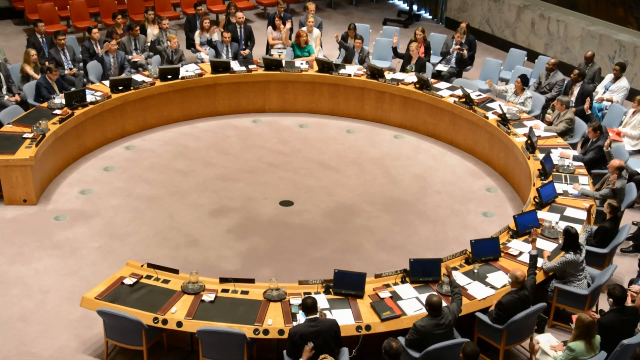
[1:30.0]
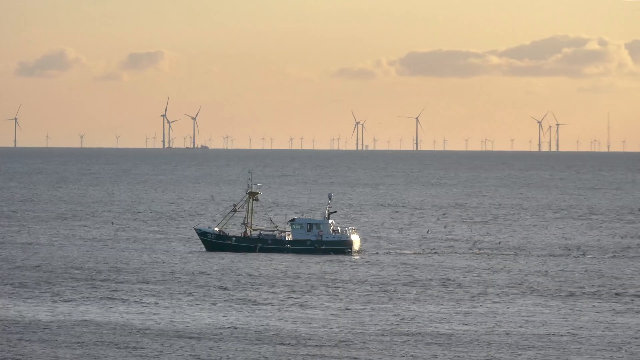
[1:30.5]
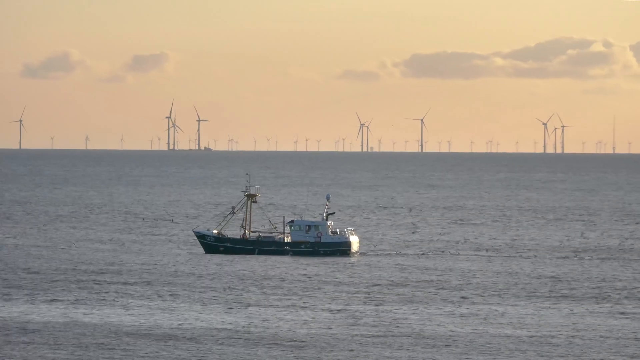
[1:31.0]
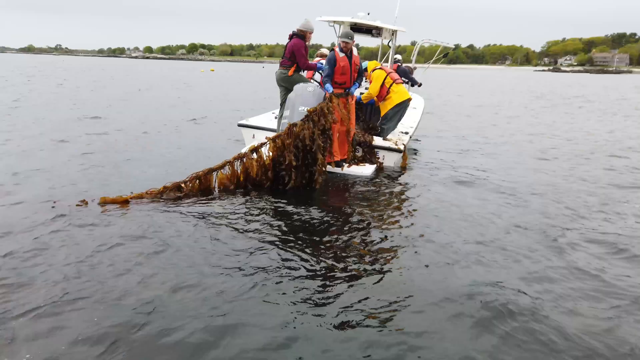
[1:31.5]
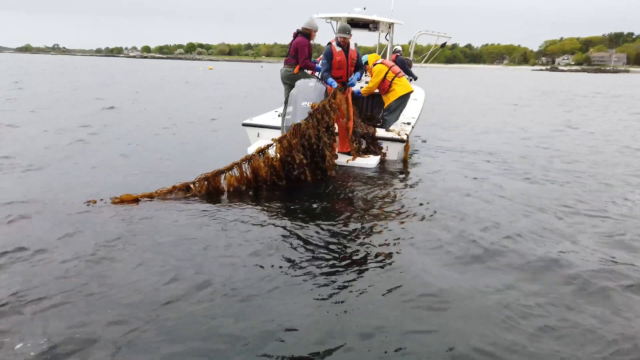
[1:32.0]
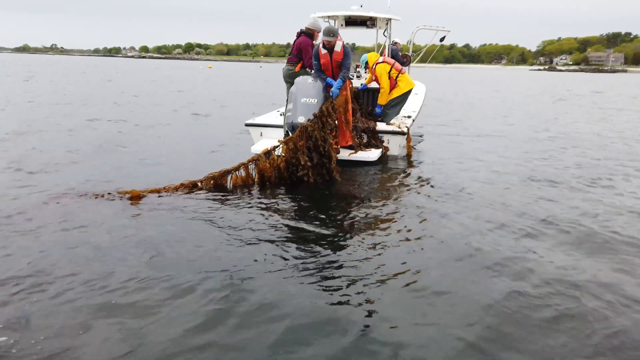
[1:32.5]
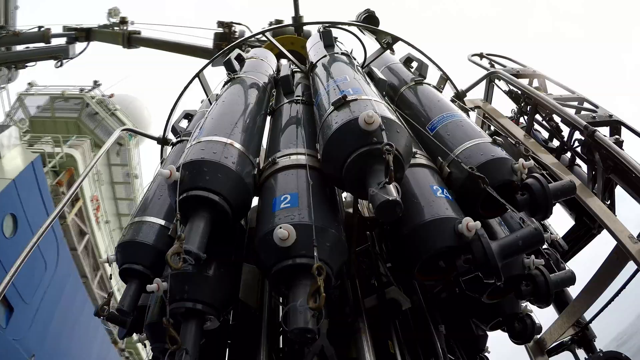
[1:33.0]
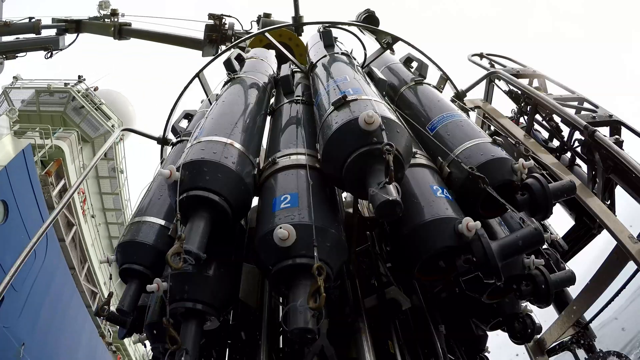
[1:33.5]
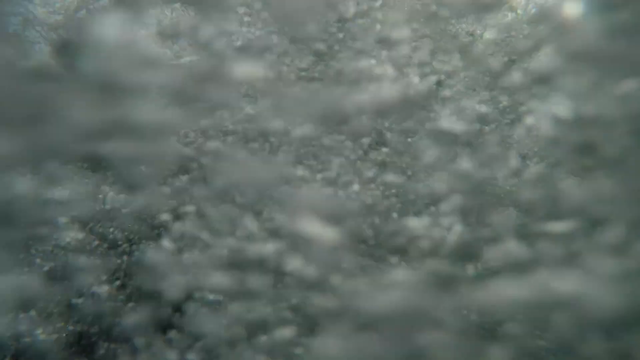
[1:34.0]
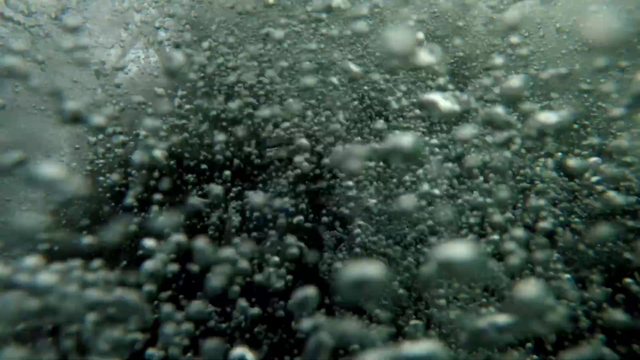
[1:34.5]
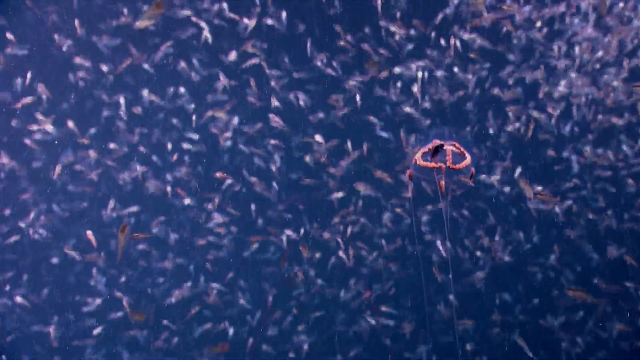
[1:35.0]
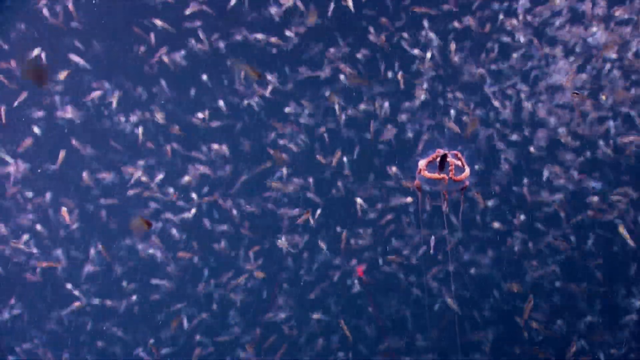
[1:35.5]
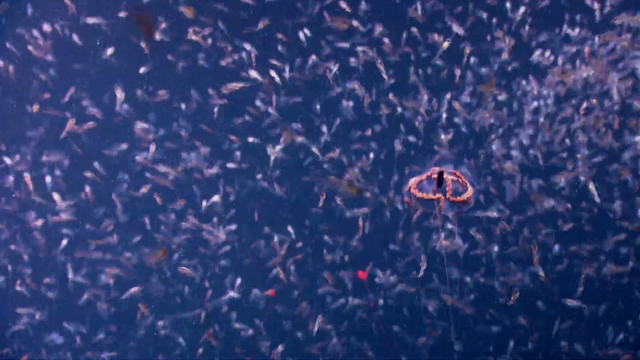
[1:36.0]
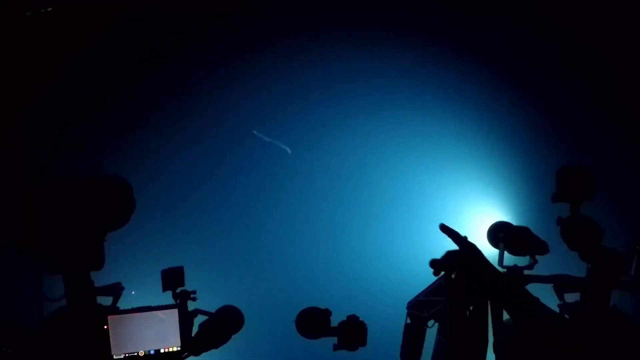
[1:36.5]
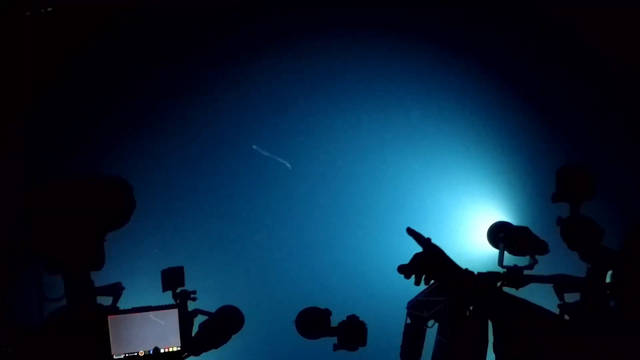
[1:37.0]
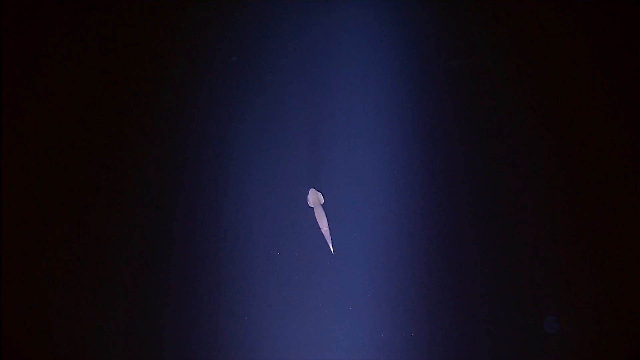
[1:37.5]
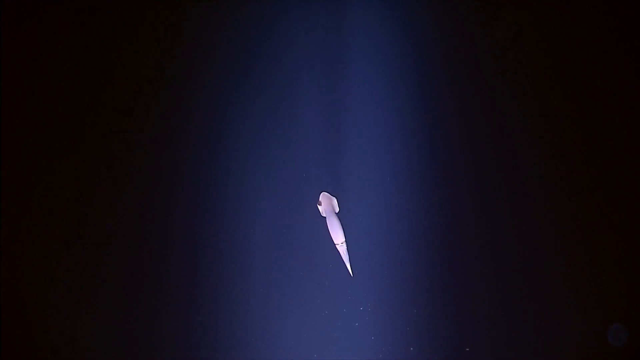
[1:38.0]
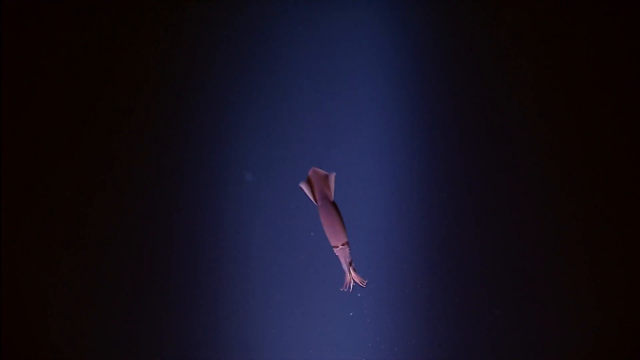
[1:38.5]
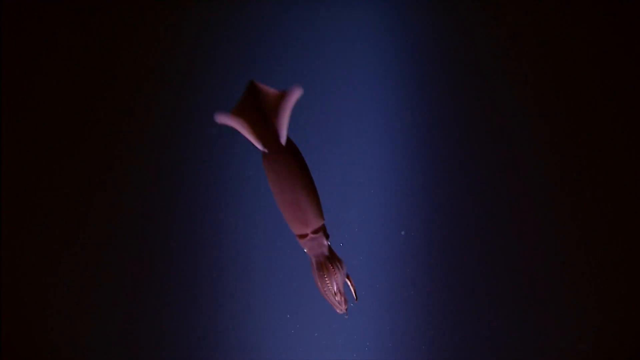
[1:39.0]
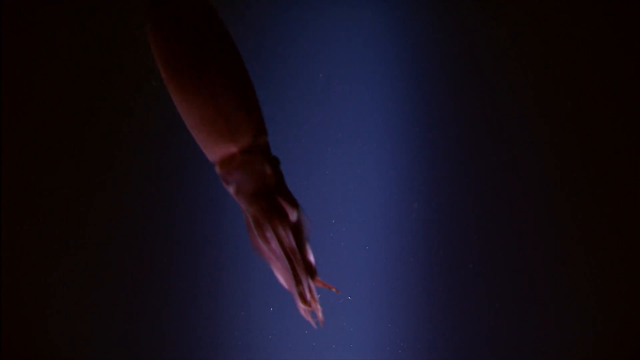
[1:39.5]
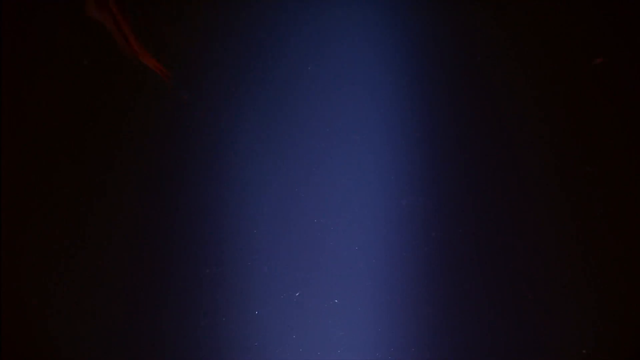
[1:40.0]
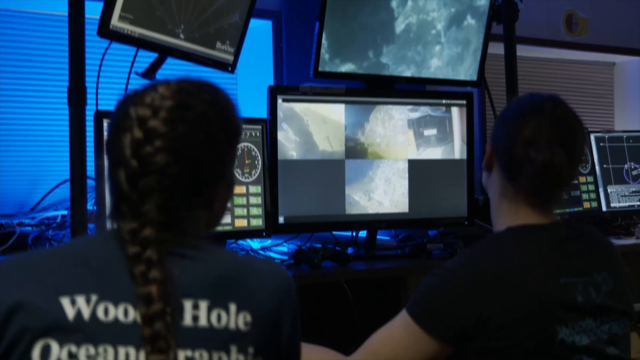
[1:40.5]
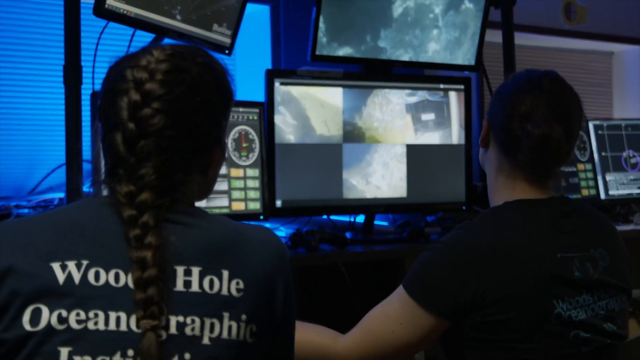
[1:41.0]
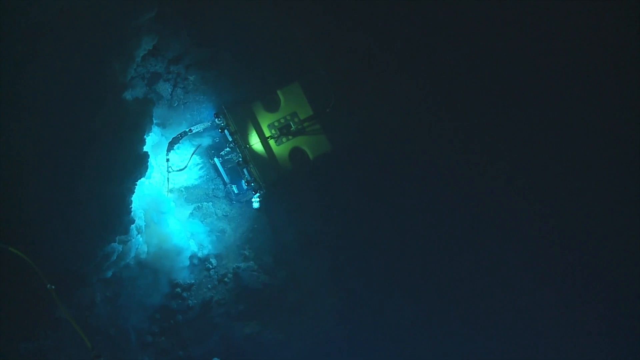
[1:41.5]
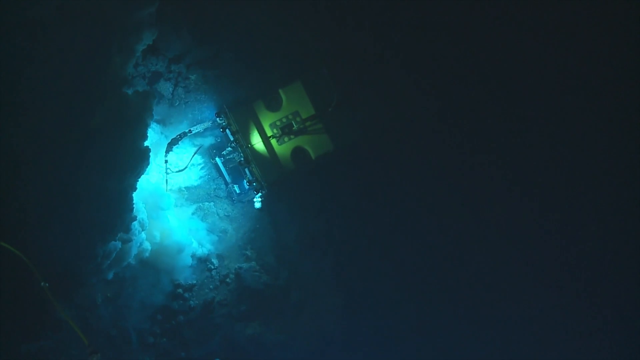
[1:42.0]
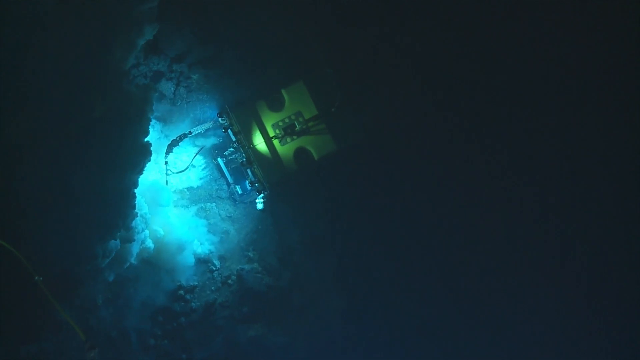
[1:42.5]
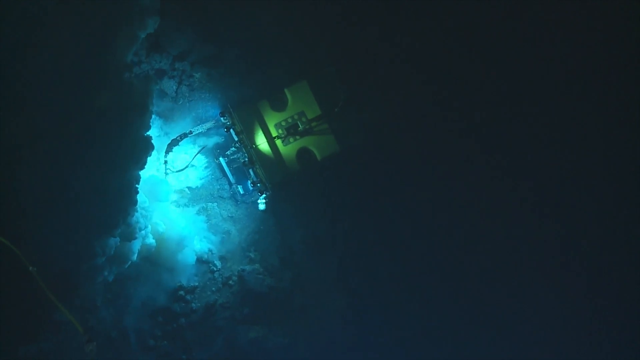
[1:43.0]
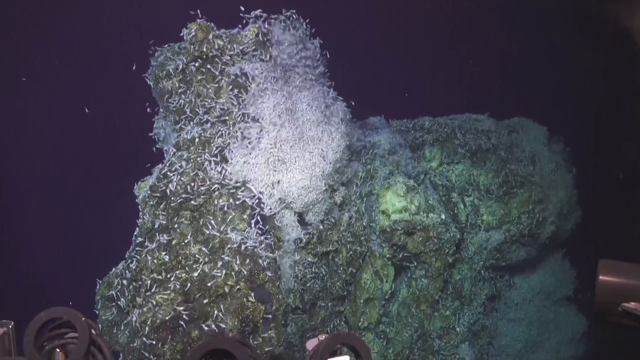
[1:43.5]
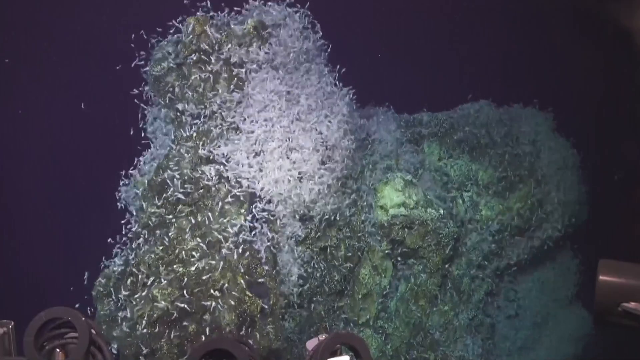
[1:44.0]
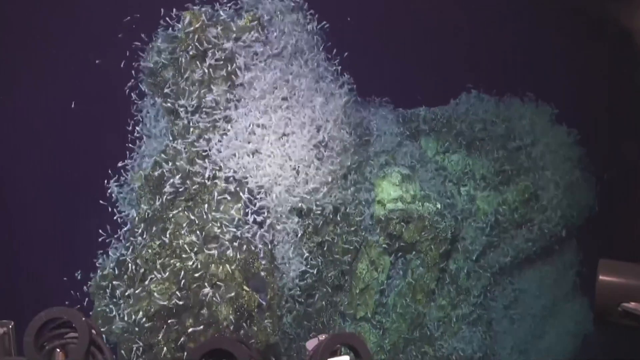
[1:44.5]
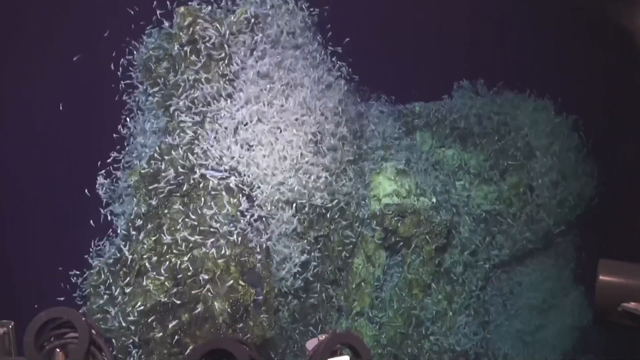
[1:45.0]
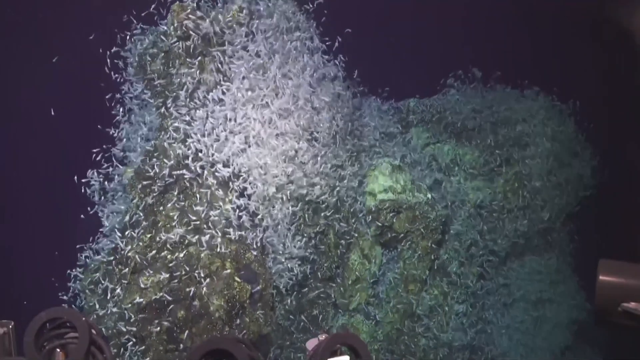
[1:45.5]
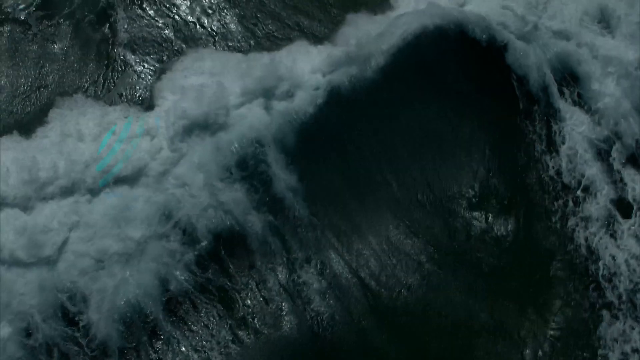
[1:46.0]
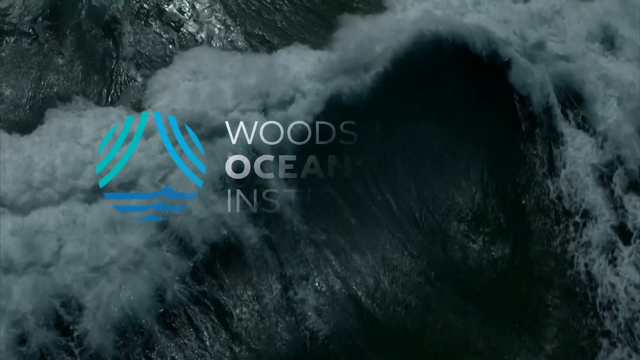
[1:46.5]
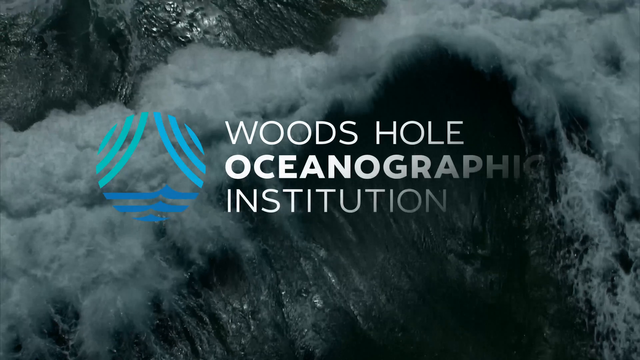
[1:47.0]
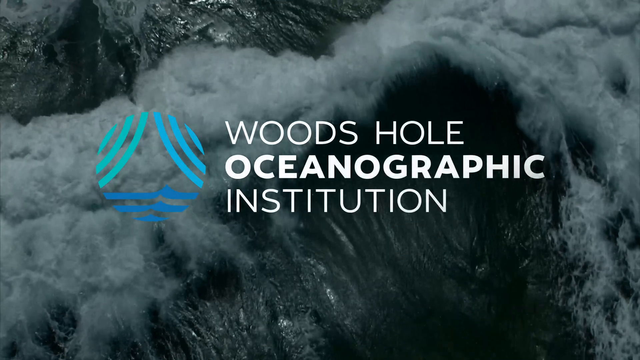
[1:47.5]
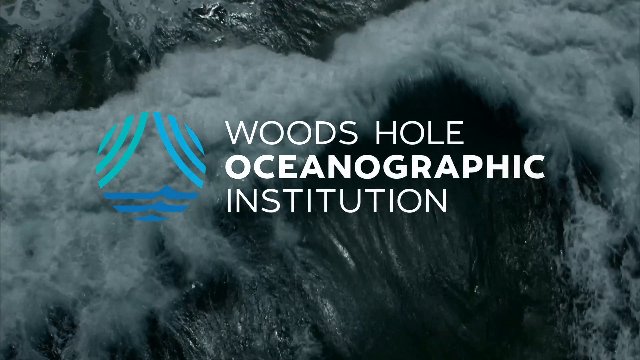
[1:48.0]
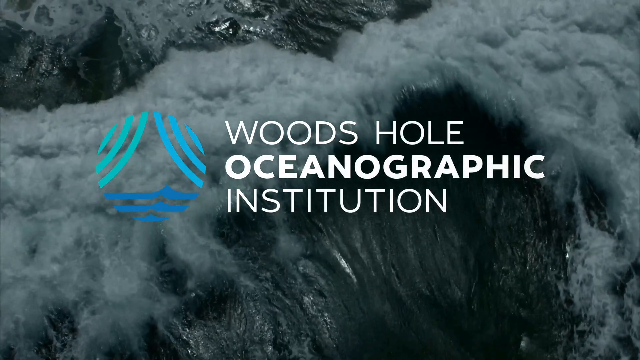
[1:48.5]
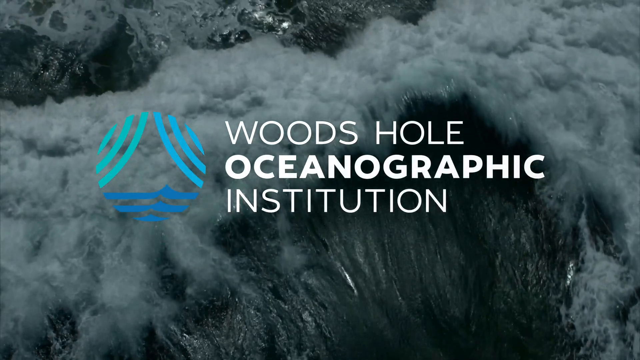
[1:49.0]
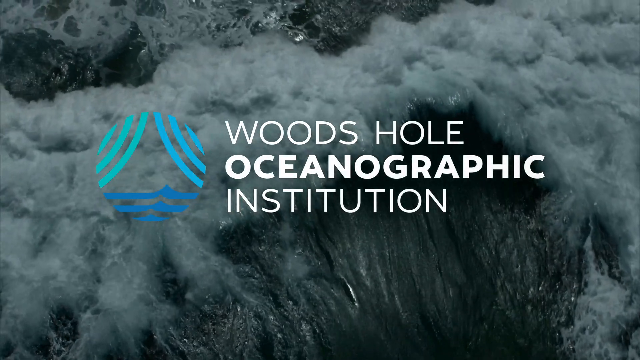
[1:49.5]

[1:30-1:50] A man stands in front of a screen explaining something to the audience about a NASA science project. A woman on a stage has everyone's attention as people listen; she seems to be talking about an ocean program. People wearing protective helmets work in the ocean with a big red machine, which looks like it will help with their project. A picture shows a conference room where members are sitting. A boat is on the ocean, and people on the small boat collect fish from their fish nets. A black machine is held up, meant to go into the water. Very tiny pink fish swim around. An octopus appears to be watched by the research team, who point to it on big screens showing what is happening underwater.